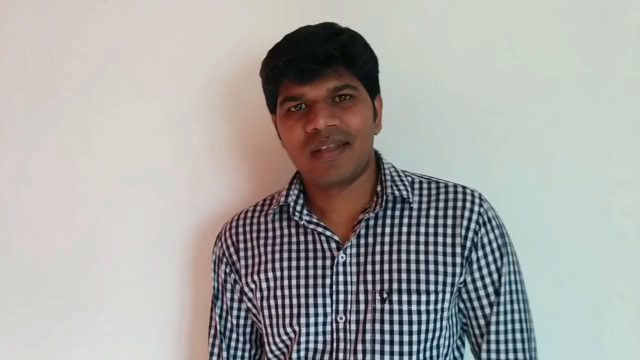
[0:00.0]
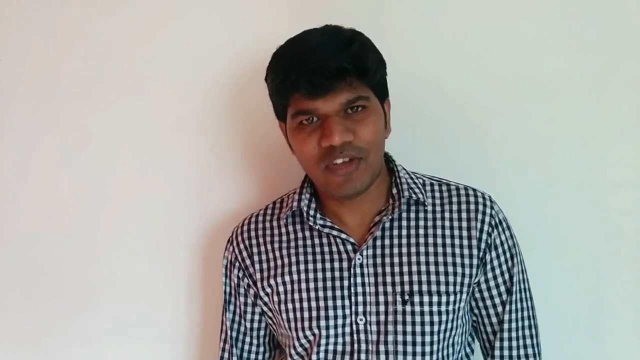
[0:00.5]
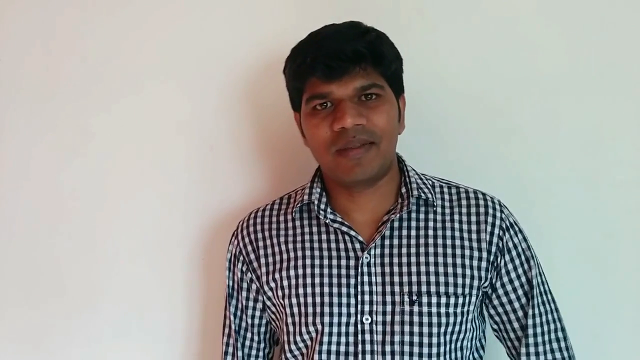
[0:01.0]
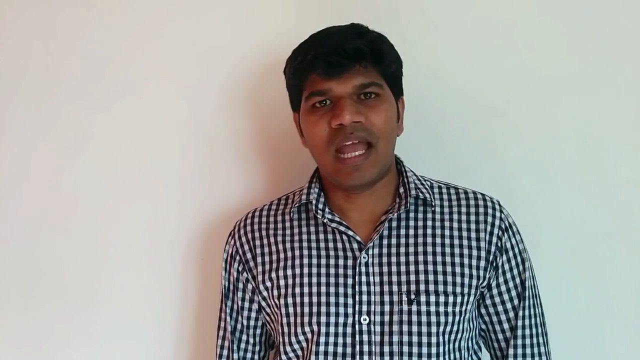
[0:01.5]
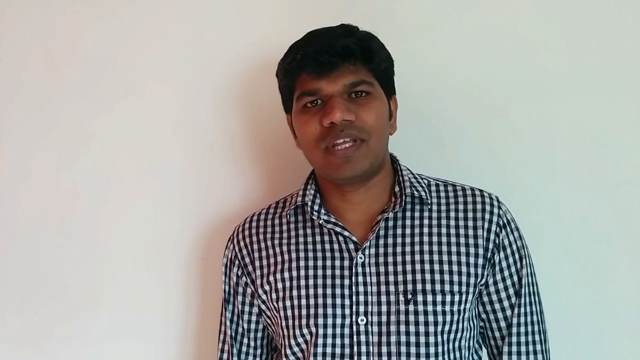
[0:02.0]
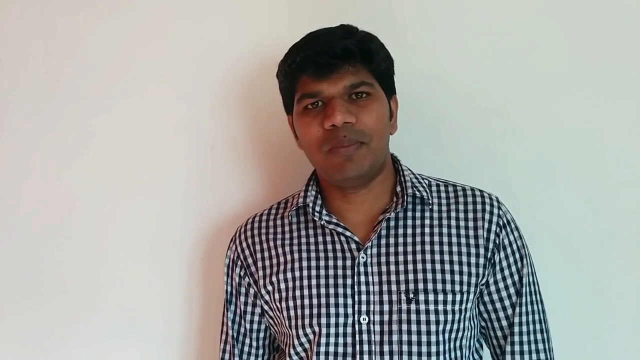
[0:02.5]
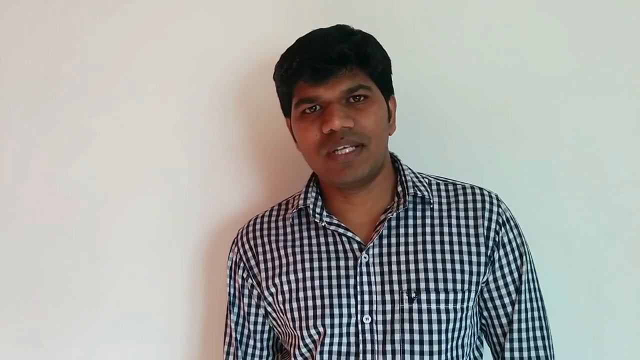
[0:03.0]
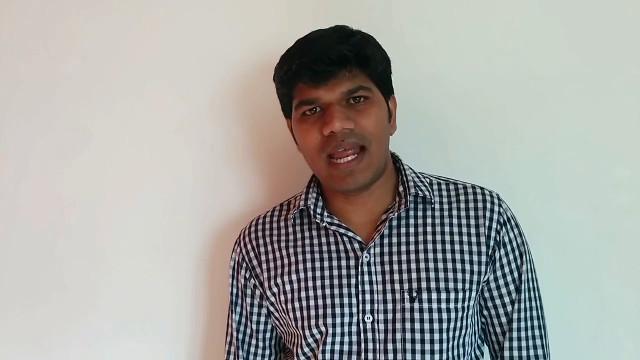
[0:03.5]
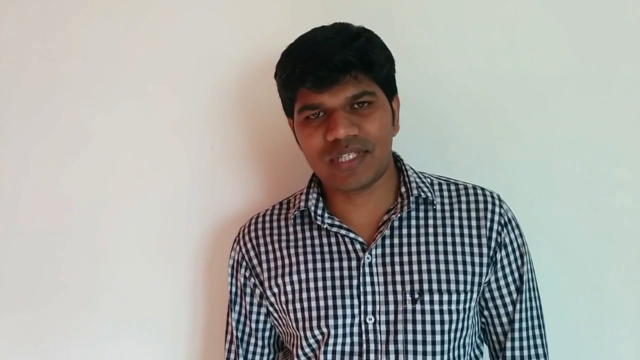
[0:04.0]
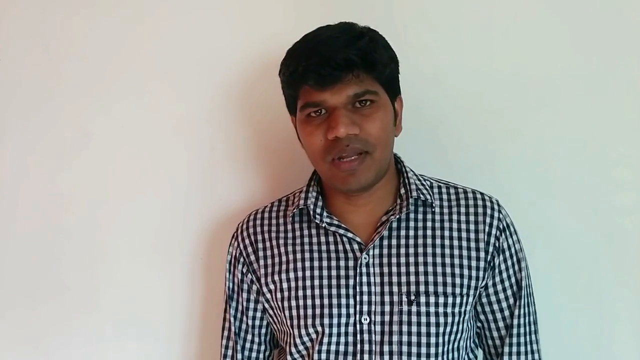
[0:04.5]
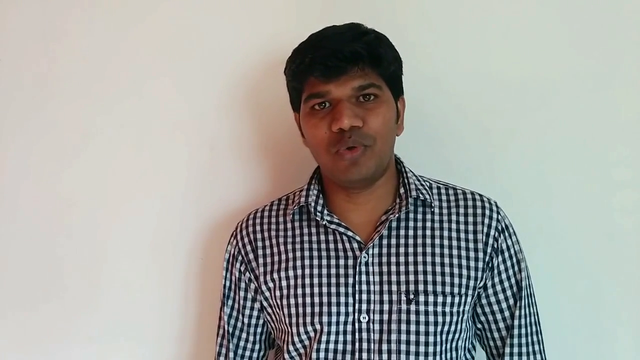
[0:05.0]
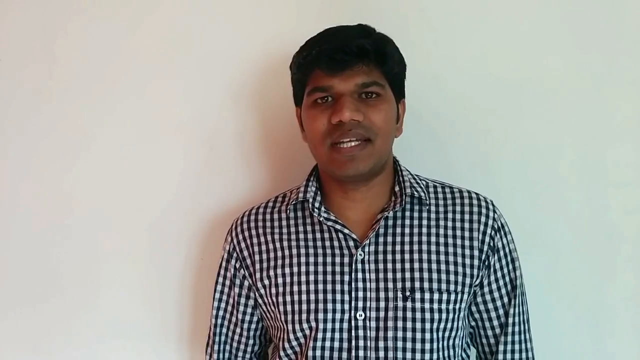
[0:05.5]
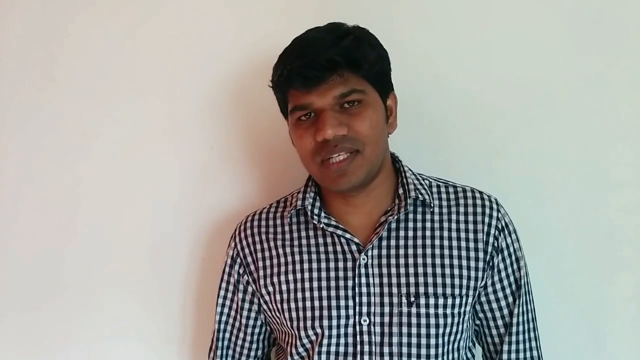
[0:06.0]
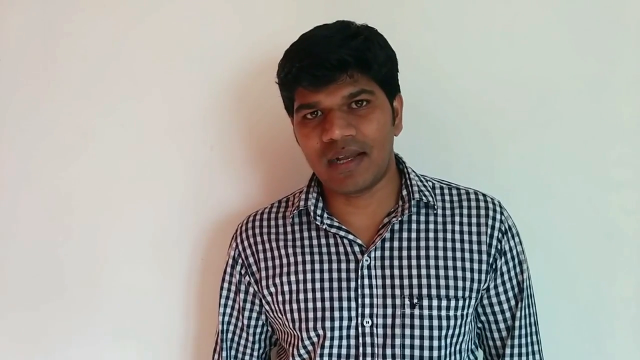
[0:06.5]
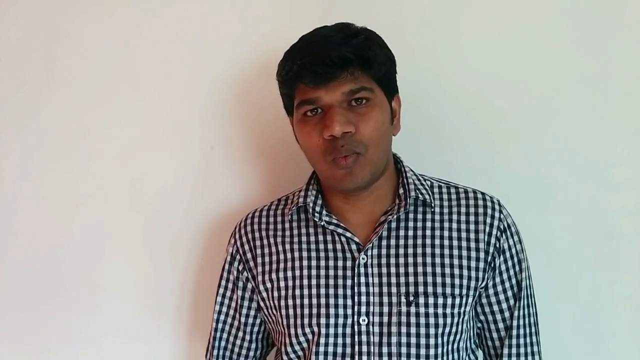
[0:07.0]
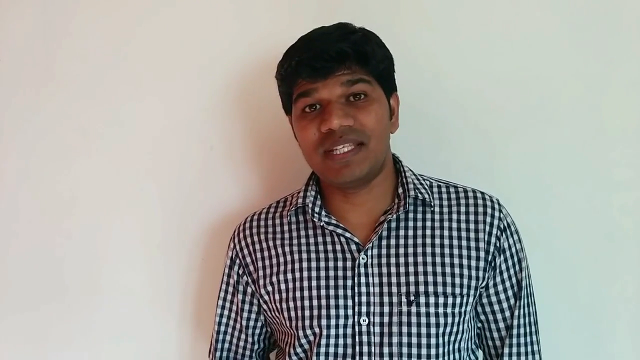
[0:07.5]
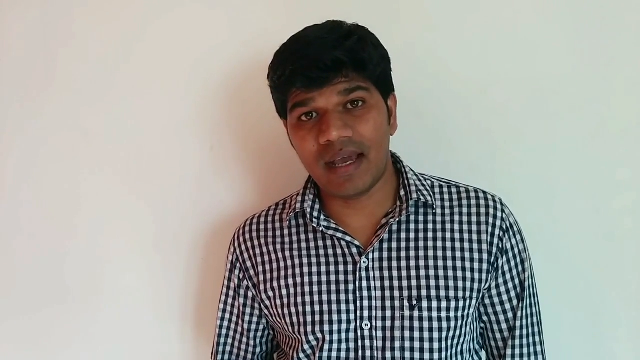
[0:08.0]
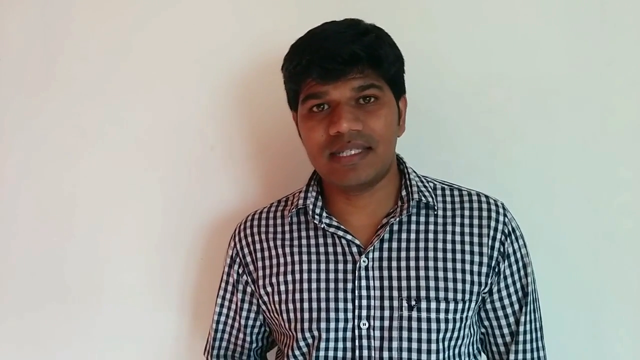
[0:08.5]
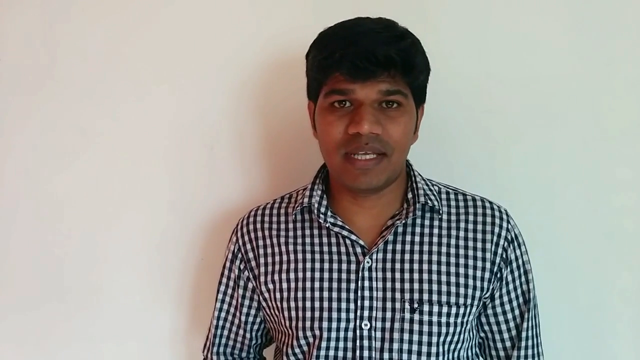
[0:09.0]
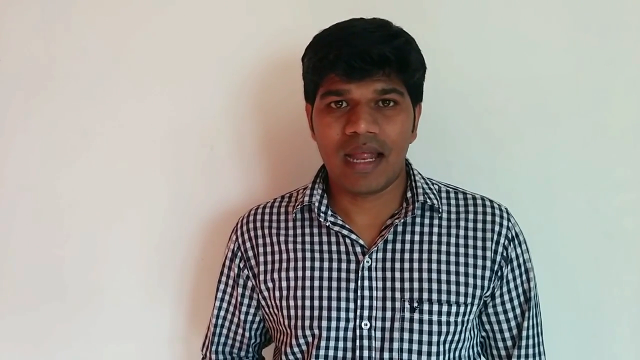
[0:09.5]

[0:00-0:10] The video opens on one man, a dark-skinned man with dark hair wearing a checkered blue and white button-down shirt. He is standing against a white wall, looking directly at the camera and speaking. He appears to be maybe 28 to 32 years old and seems friendly and competent. He speaks in an average tone, is not excitable and uses no hand gestures; he simply speaks to the camera.